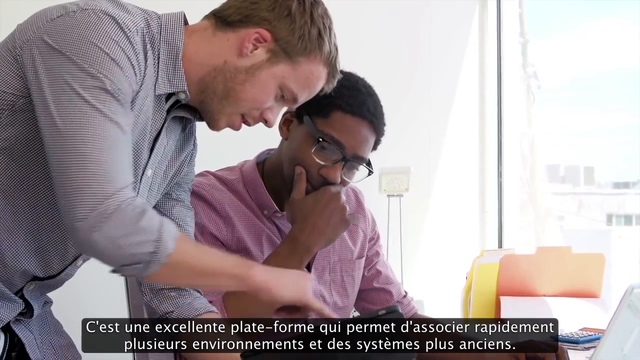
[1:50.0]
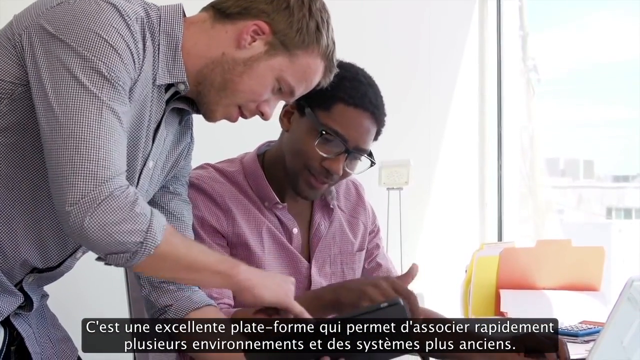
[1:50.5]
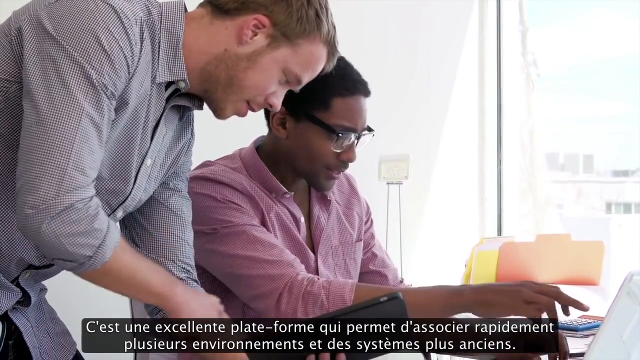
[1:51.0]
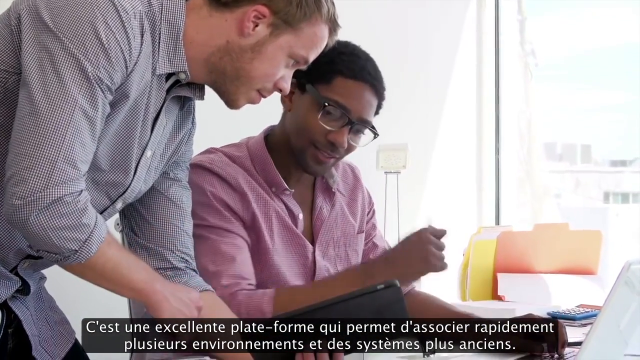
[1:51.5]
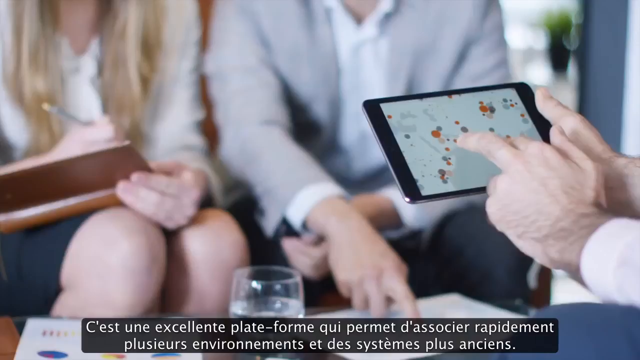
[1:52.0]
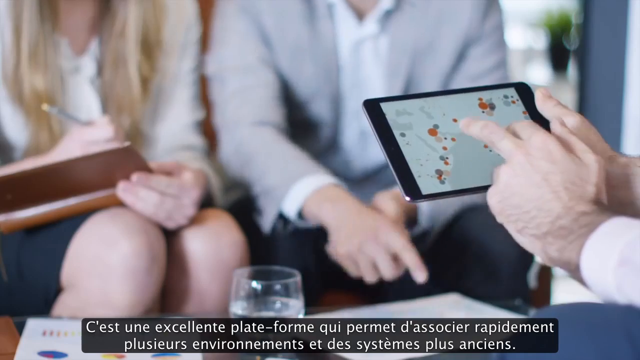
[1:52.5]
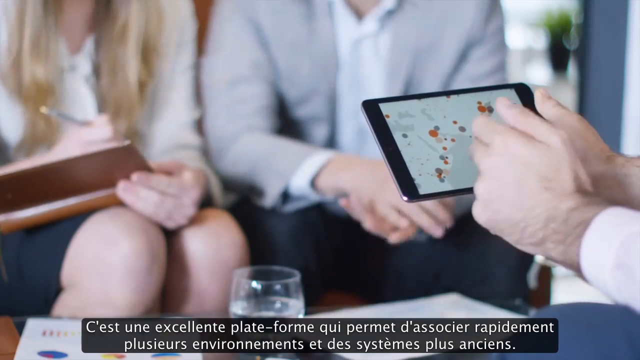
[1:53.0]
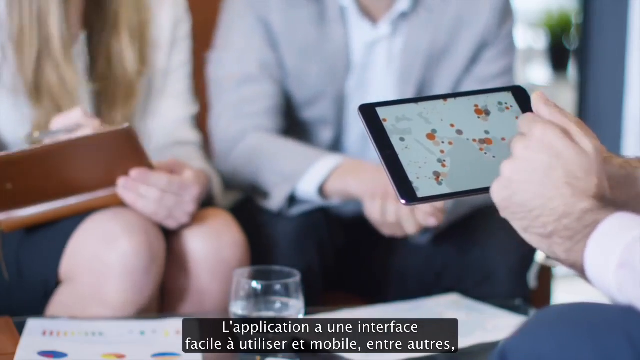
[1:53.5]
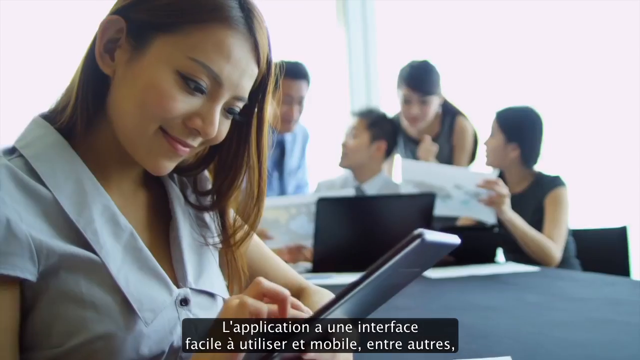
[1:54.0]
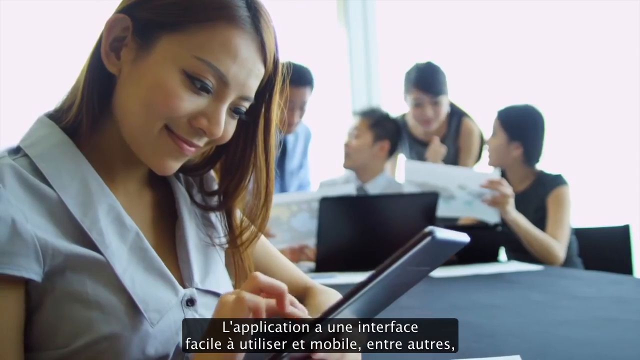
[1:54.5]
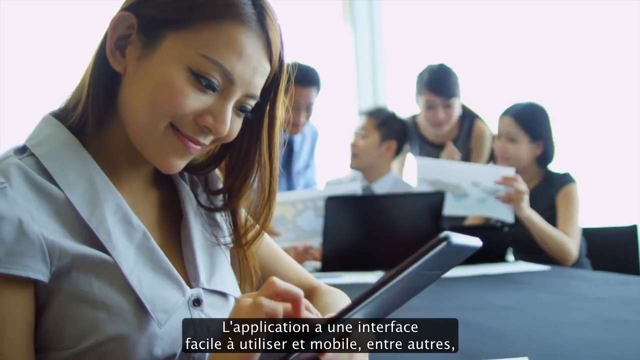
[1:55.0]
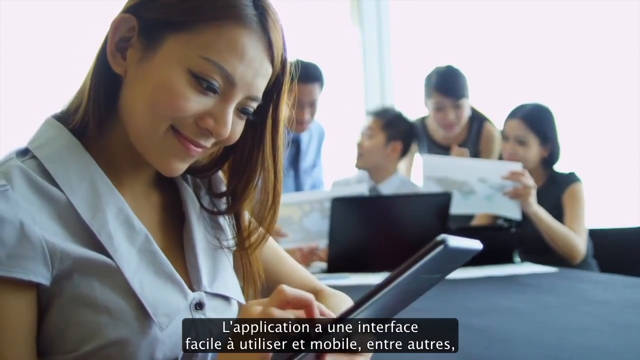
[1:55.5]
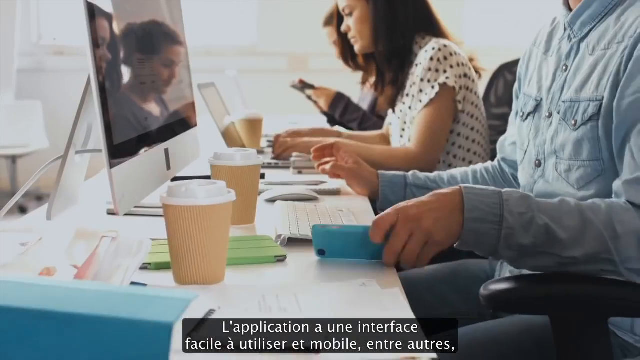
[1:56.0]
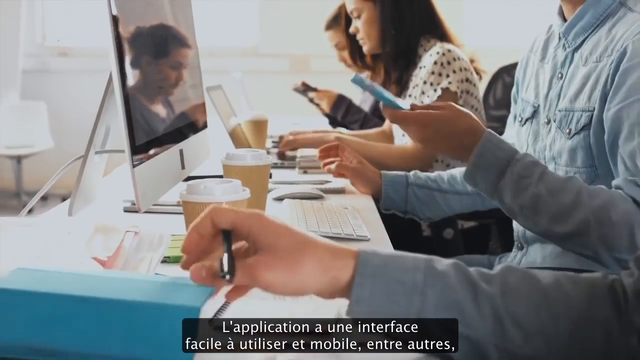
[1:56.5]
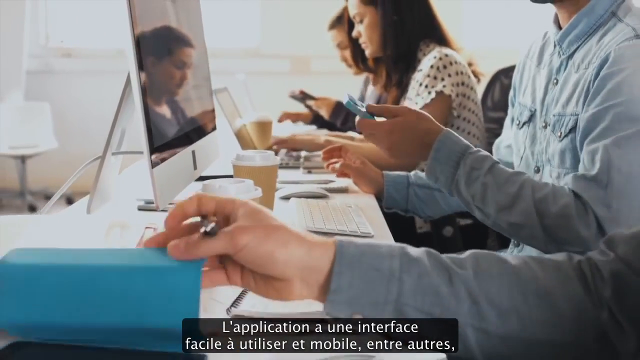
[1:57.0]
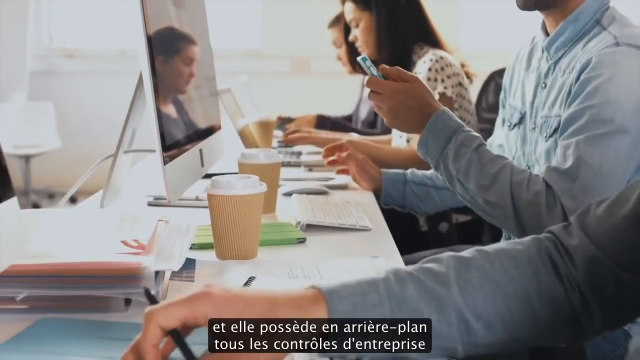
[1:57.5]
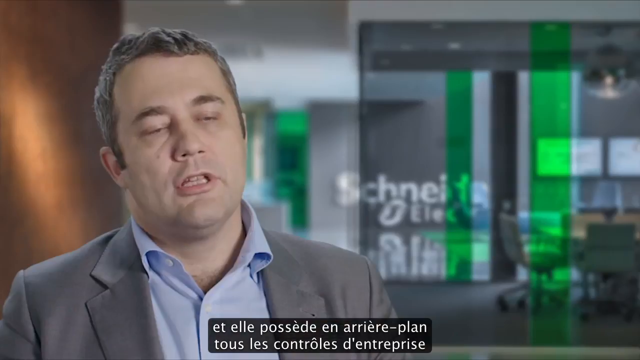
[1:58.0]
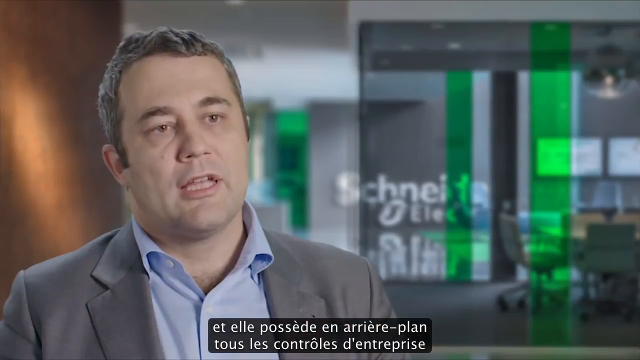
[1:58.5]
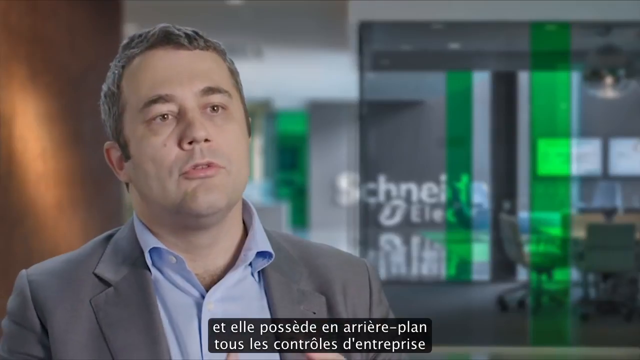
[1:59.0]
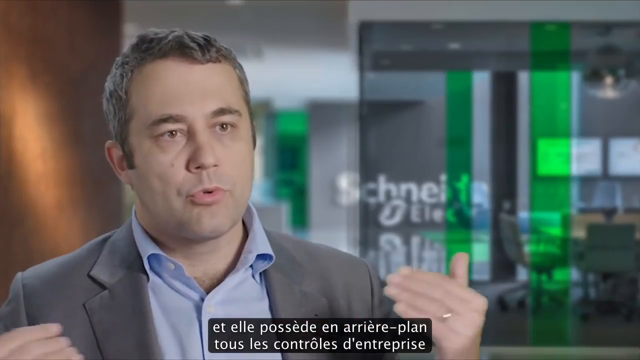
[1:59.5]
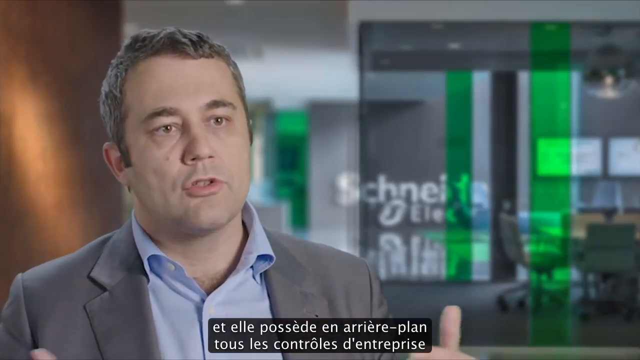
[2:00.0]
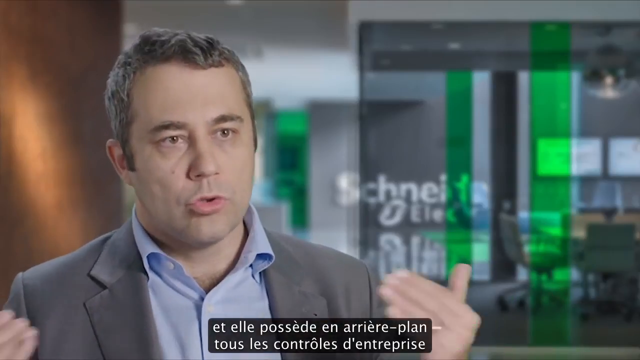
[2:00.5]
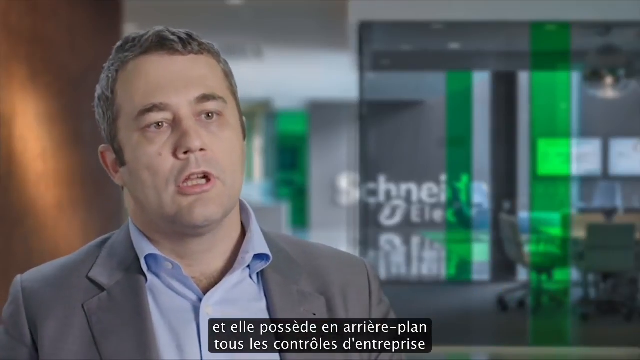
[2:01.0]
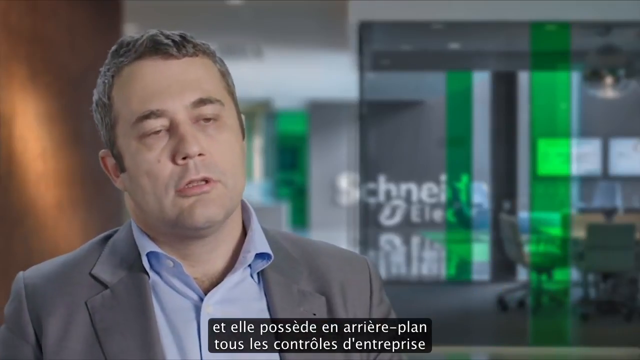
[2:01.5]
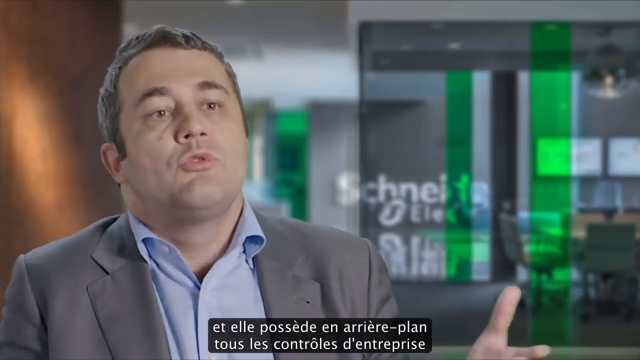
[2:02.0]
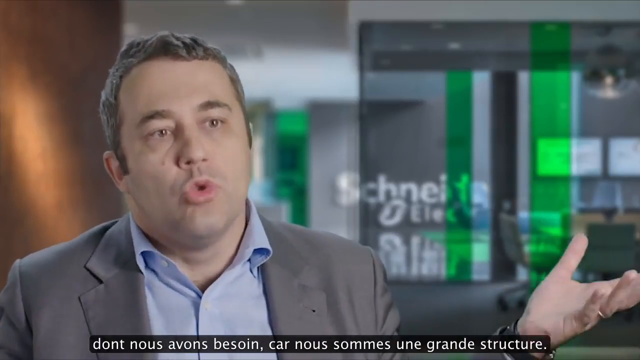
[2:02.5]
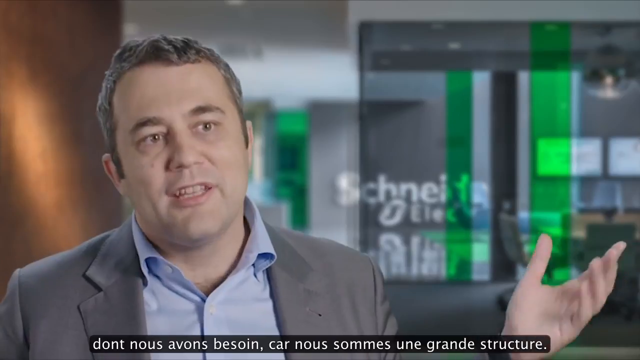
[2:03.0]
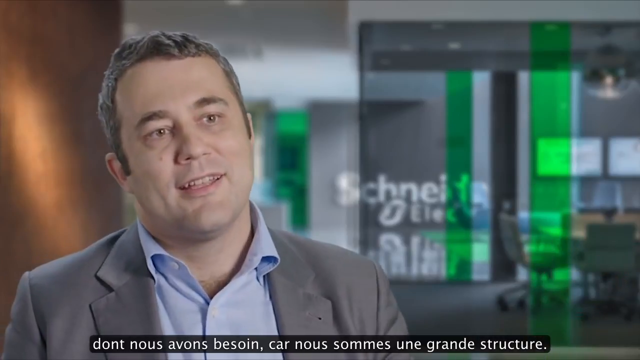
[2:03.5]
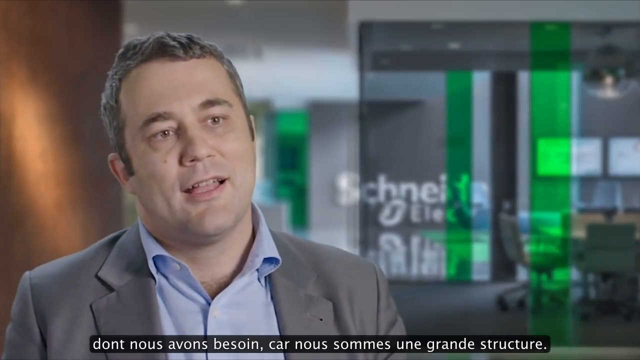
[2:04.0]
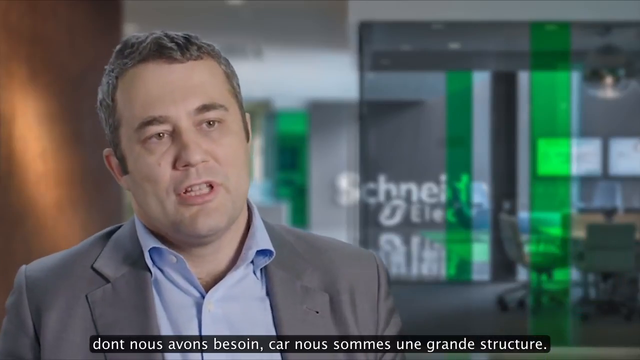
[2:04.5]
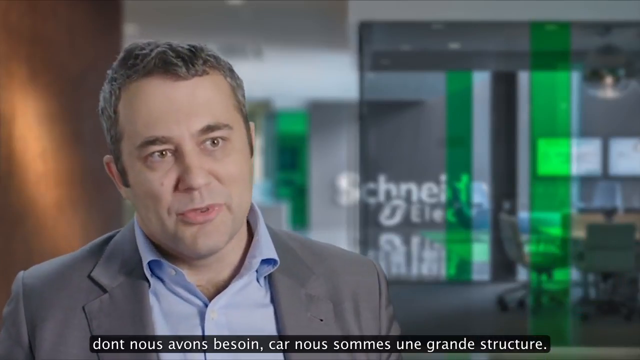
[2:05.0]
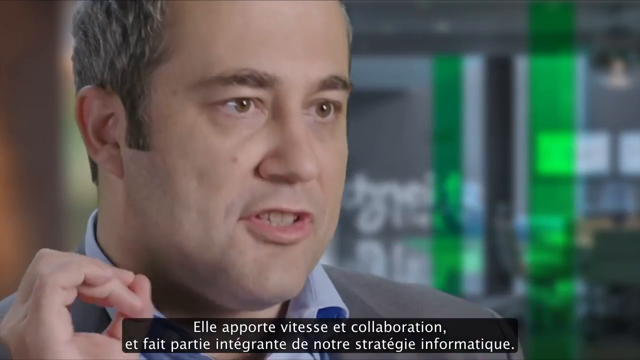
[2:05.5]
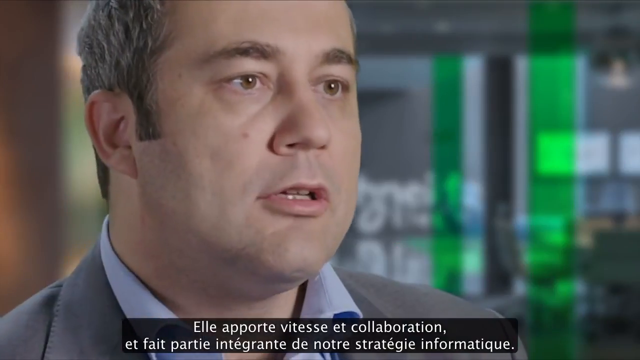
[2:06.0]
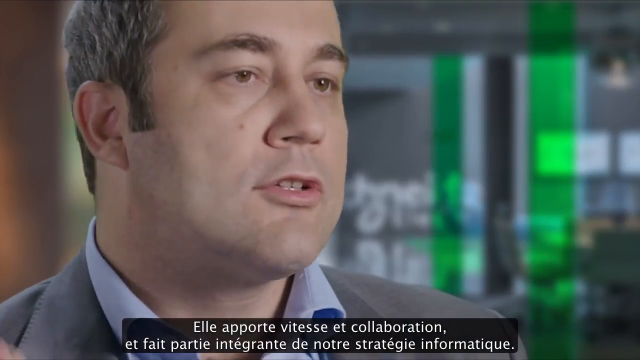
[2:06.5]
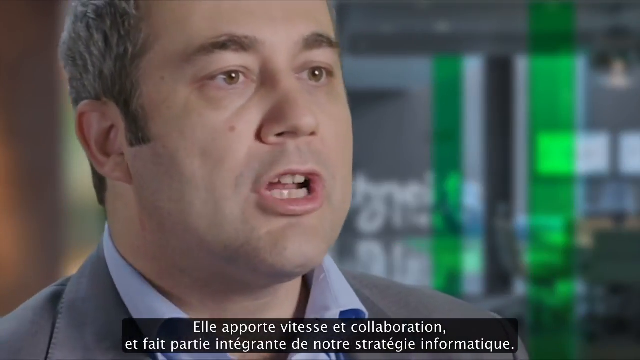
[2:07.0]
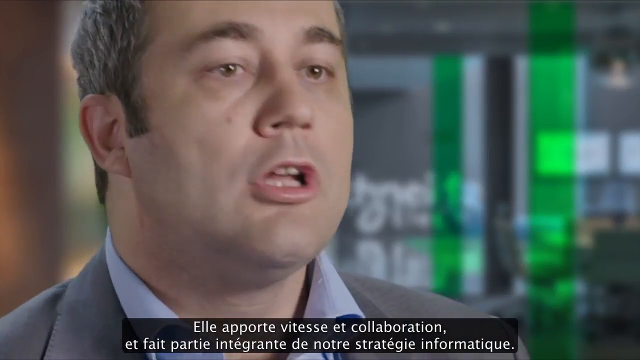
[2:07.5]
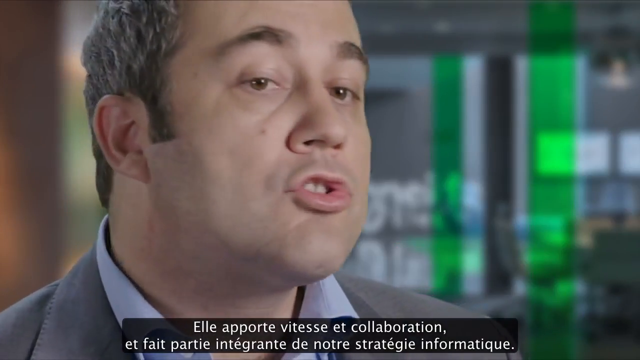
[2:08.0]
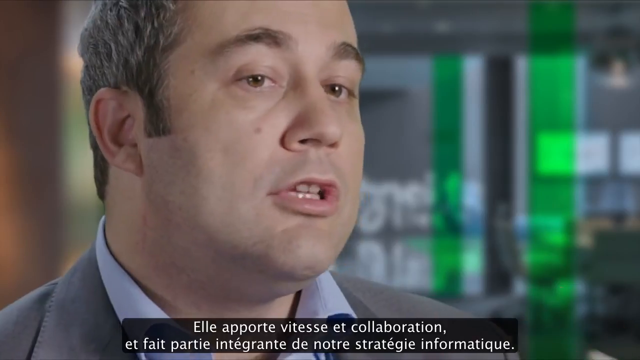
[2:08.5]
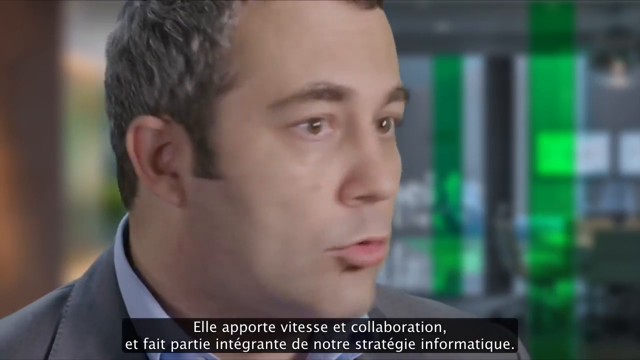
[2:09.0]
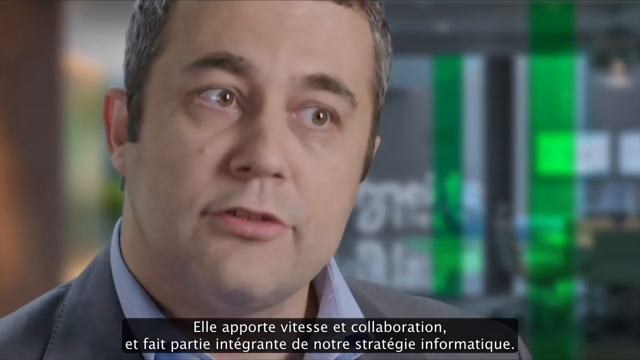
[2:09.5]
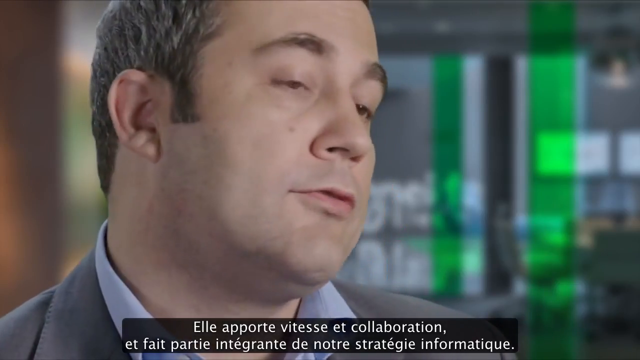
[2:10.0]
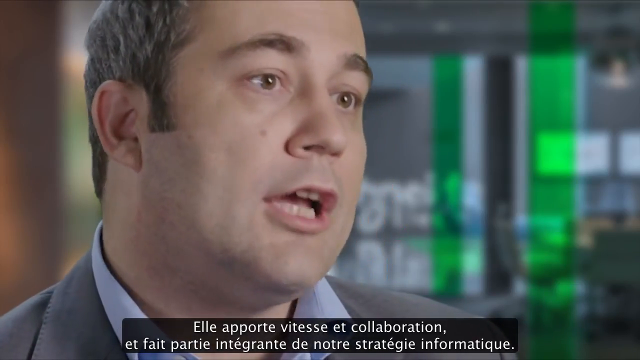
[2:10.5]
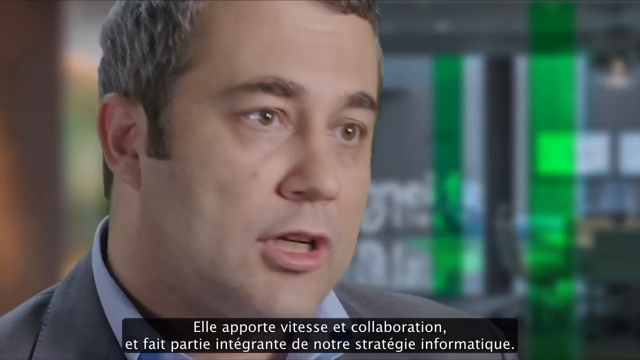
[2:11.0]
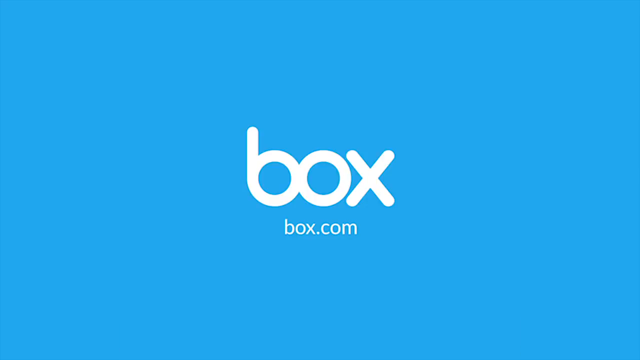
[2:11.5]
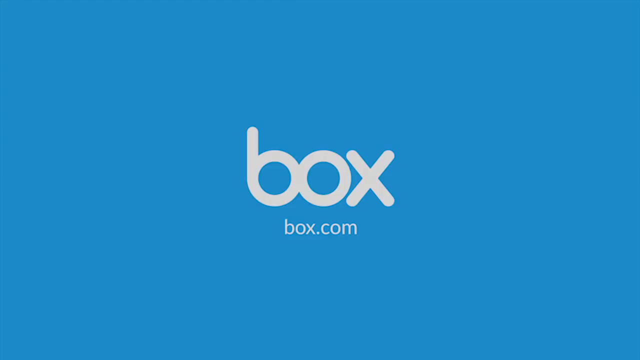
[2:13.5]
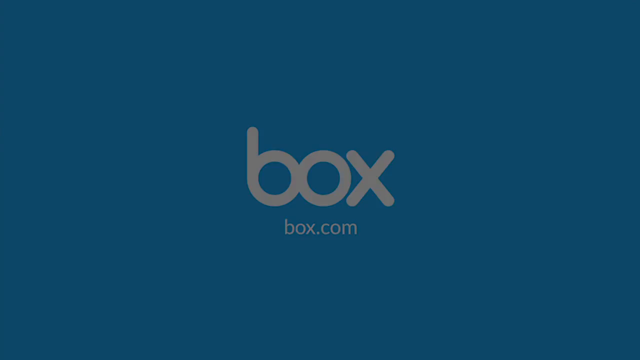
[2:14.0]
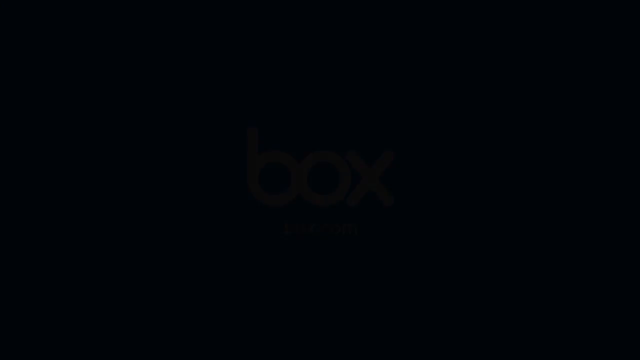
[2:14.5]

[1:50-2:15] Two men show each other something. Next, people in an office are all busy working on their laptops, and some are having coffee while they work; everyone looks very serious. The man explains something again, looking a bit concerned, possibly about the usage of electricity. At the end of the video, a sign reading "box.com" appears.